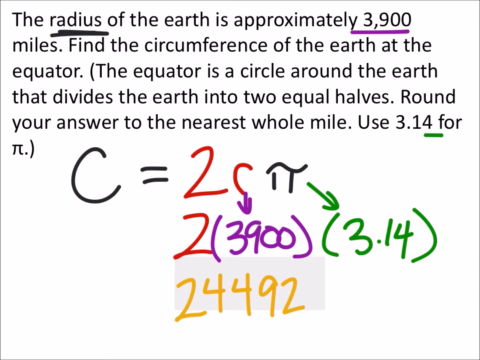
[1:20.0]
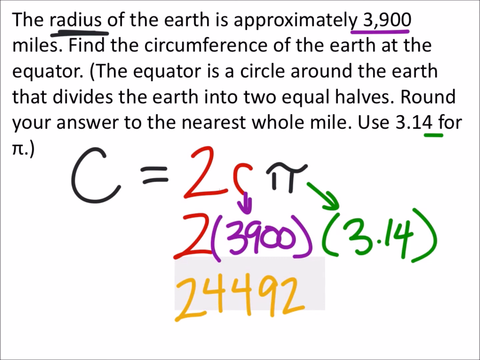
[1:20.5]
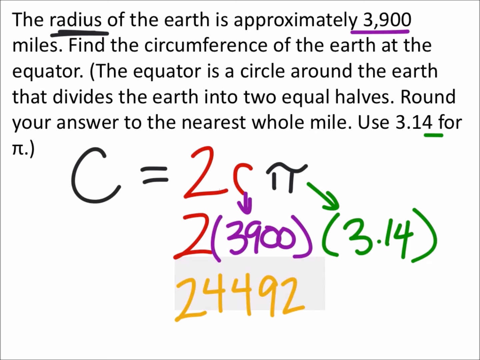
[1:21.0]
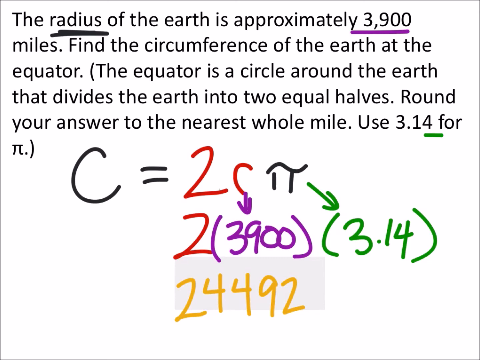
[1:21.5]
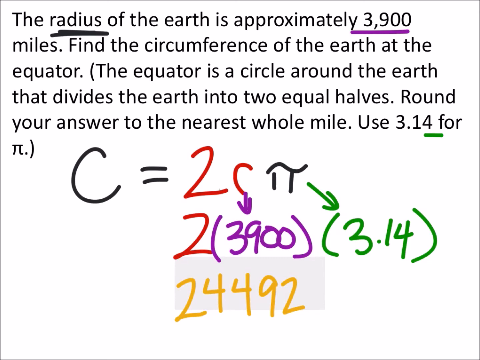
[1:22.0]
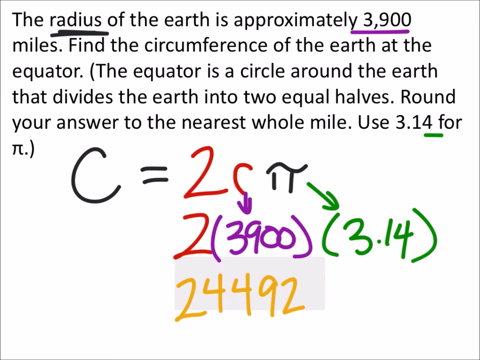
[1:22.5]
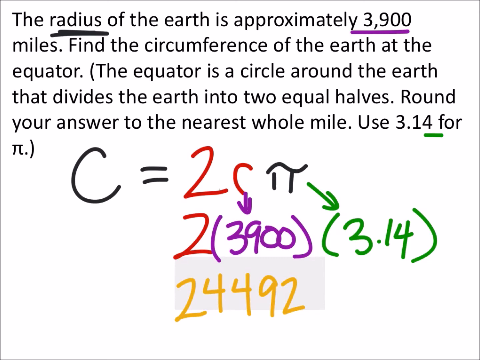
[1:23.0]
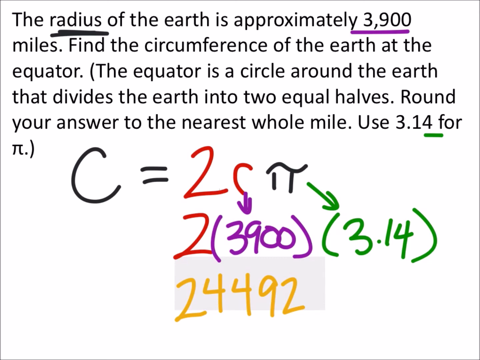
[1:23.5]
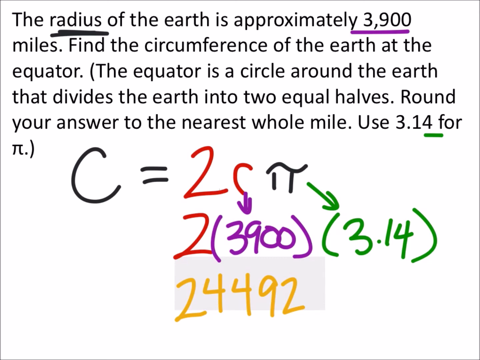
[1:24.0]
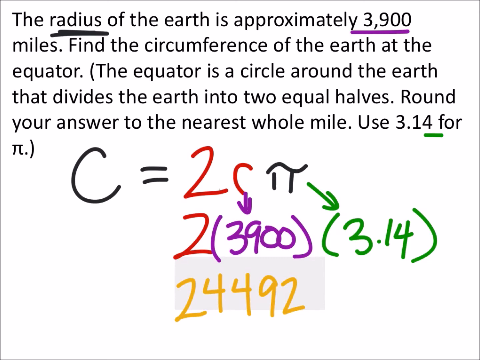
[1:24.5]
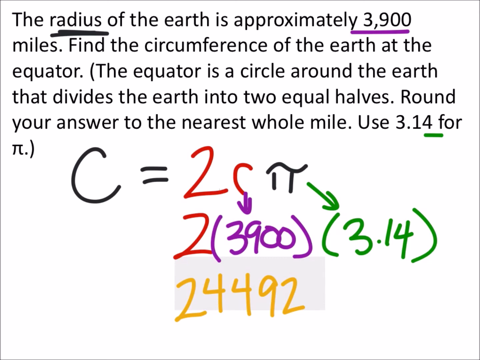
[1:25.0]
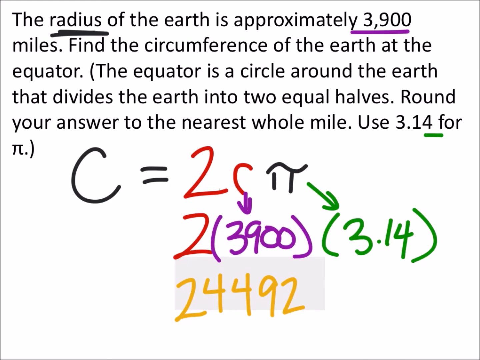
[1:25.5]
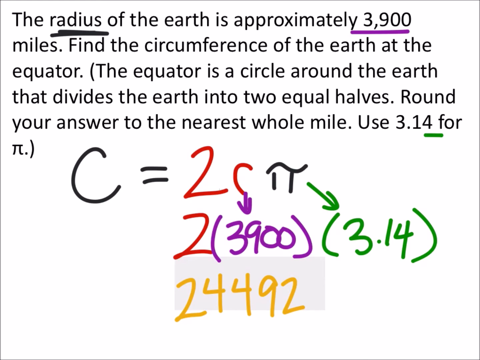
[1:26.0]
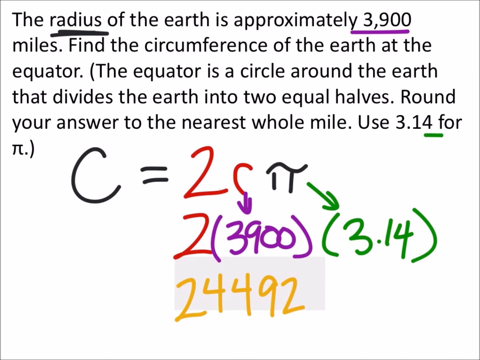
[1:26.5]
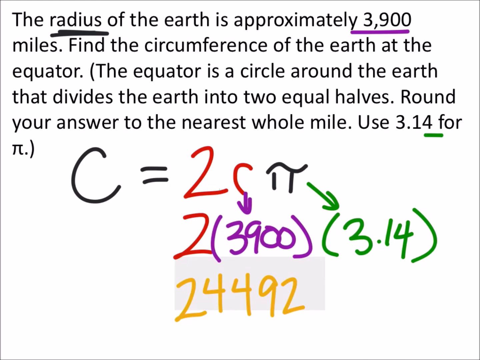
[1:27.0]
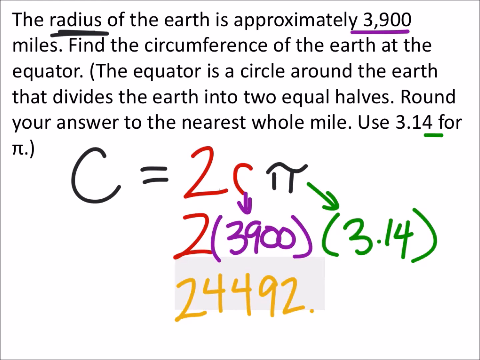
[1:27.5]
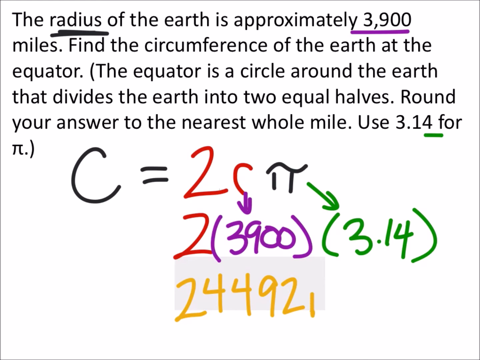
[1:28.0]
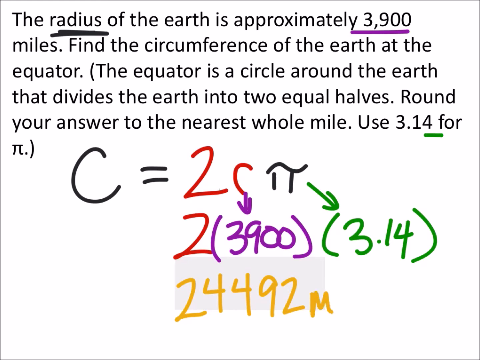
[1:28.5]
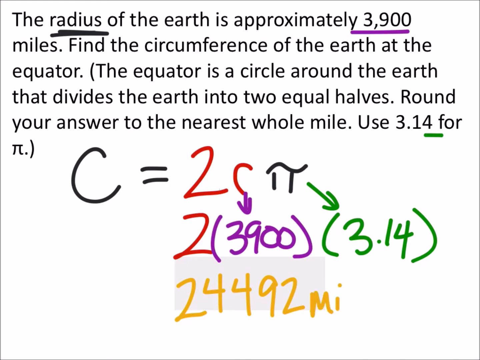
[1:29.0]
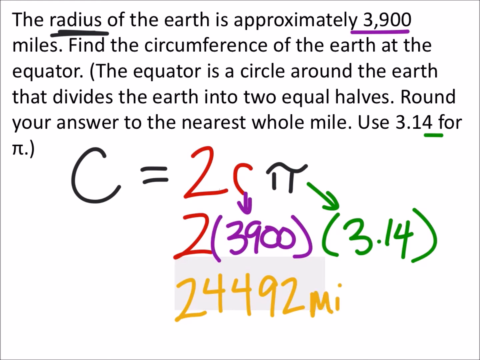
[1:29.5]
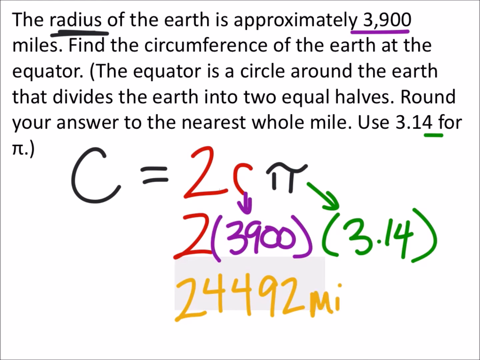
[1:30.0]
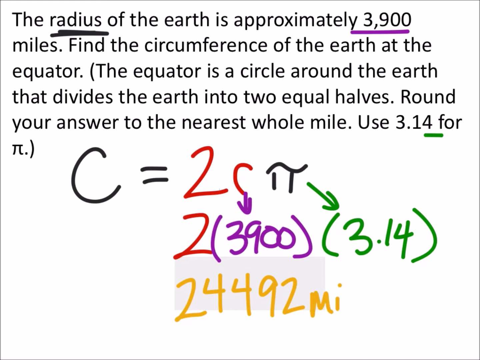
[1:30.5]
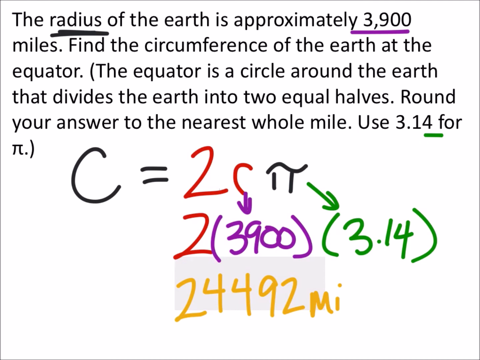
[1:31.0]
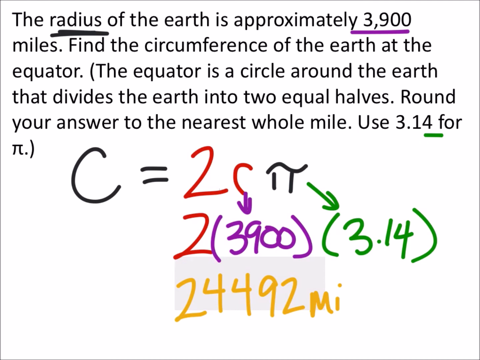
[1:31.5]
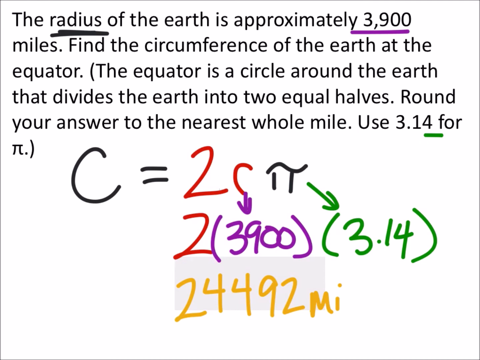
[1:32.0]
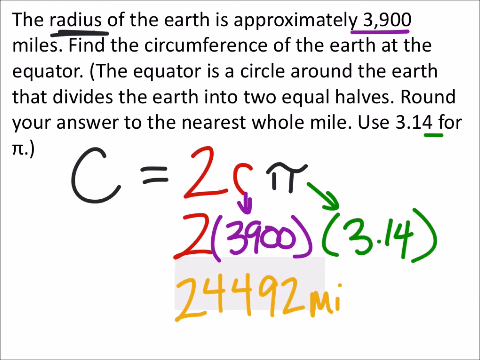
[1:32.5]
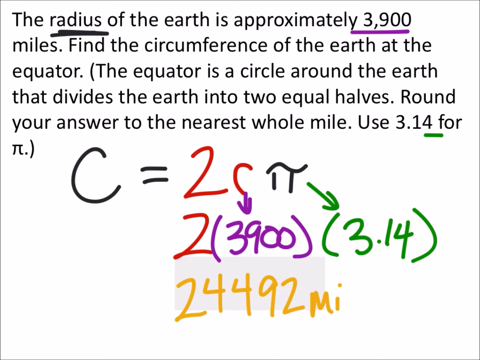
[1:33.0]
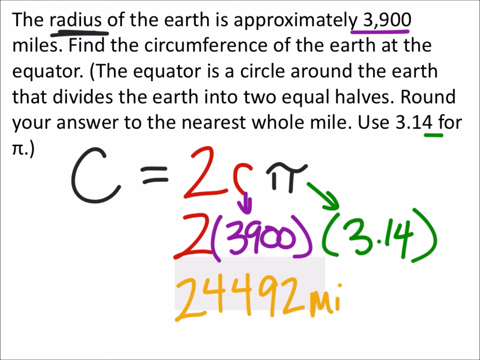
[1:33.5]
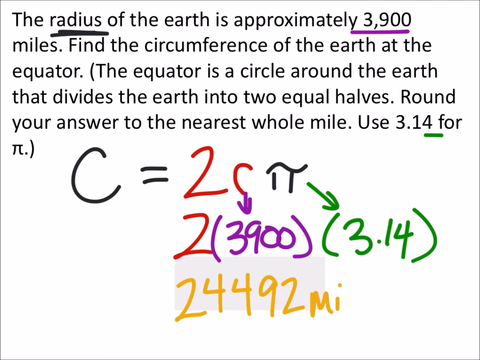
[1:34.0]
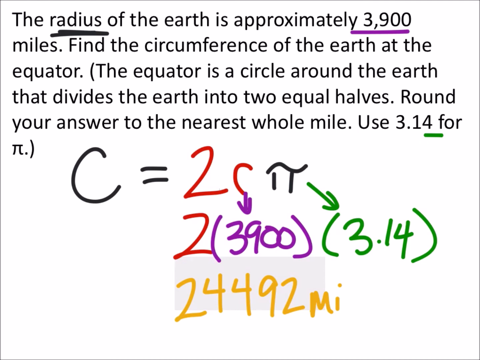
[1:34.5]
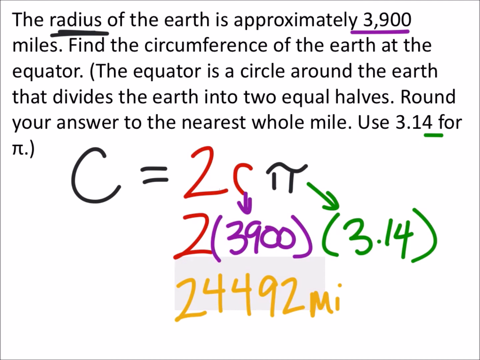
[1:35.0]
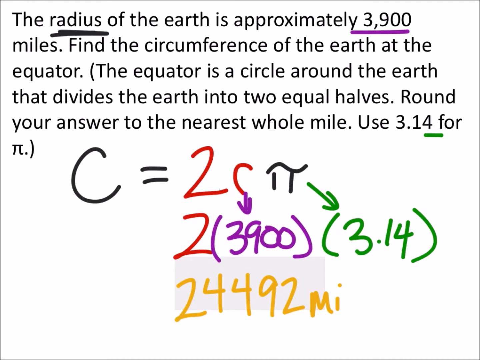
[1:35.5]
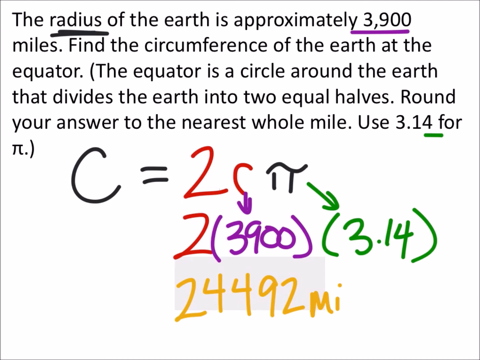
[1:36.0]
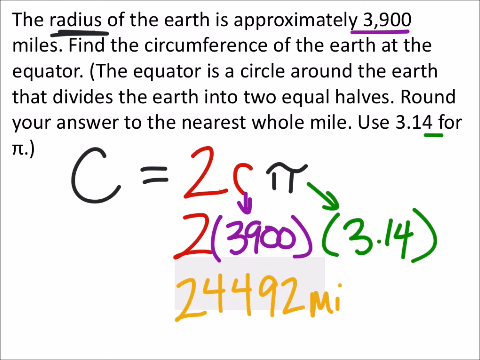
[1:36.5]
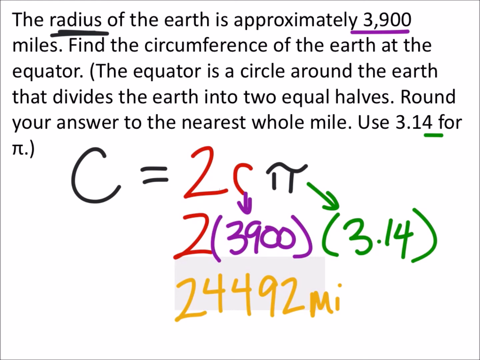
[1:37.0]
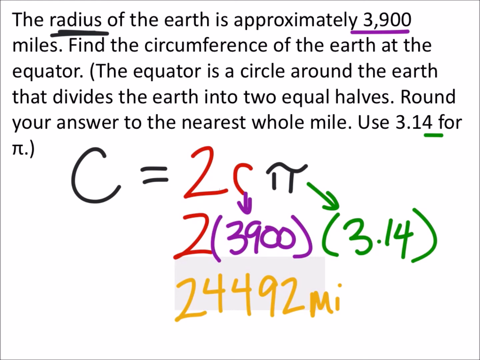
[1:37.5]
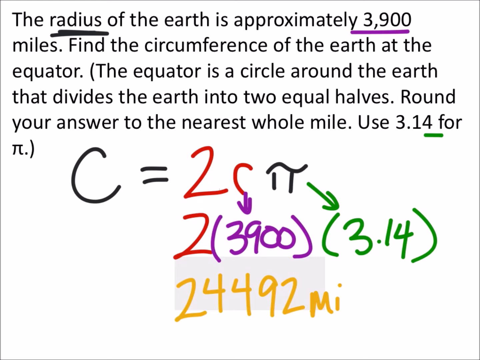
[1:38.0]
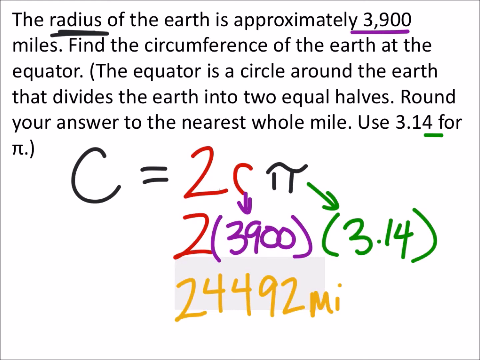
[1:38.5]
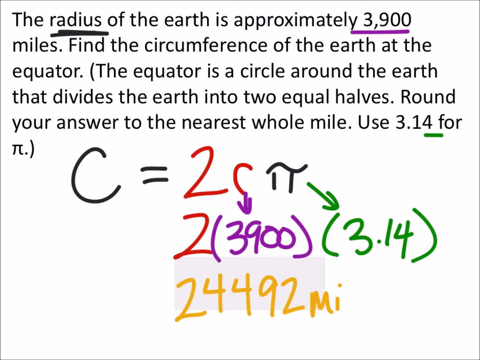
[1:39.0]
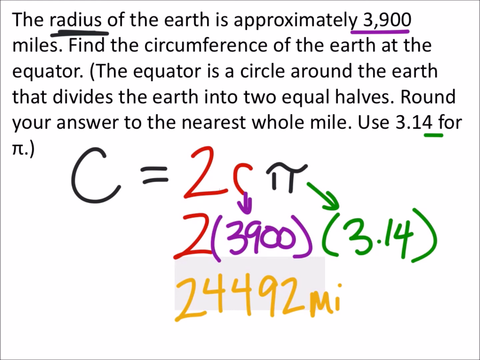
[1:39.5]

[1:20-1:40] A math problem is shown in black text against a white background at the top of the screen: "The radius of the earth is approximately 3,900 miles. Find the circumference of the earth at the equator. The equator is a circle around the earth that divides the earth into two equal halves. Round your answer to the nearest whole mile. Use 3.14 for pi." Using multiple colors, a student writes out the solution, with the handwriting appearing as they go and certain areas underlined. It reads c equals 2c pi; below that is 2 with 3,900 in parentheses, and to the right of that 3.14 in parentheses. Below, 24,492 appears in yellow text.